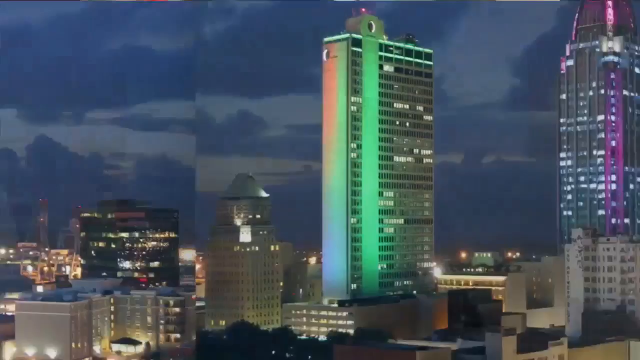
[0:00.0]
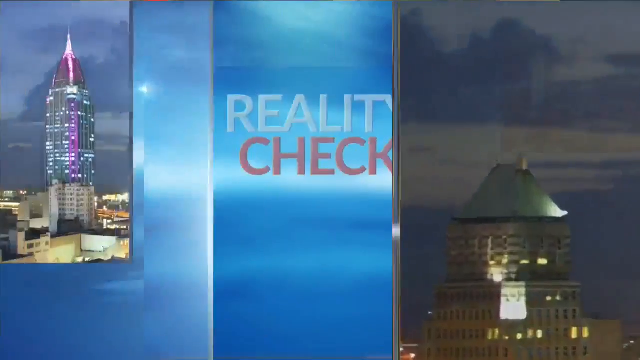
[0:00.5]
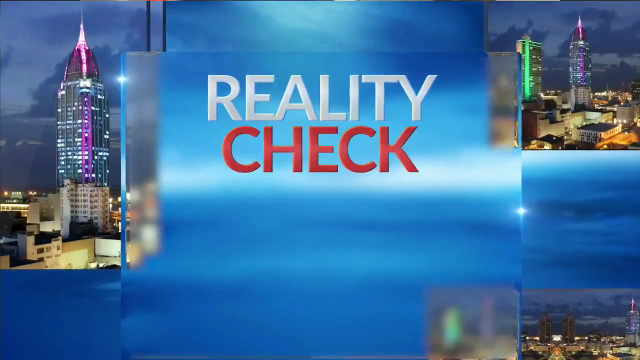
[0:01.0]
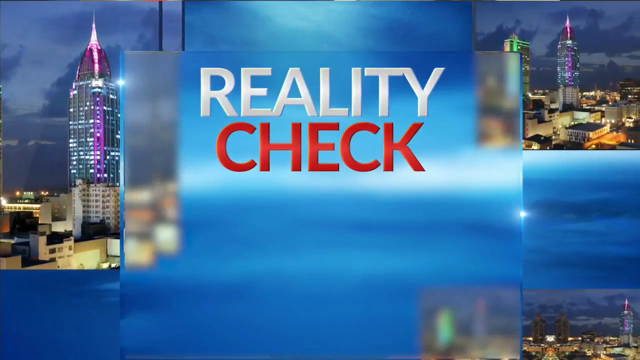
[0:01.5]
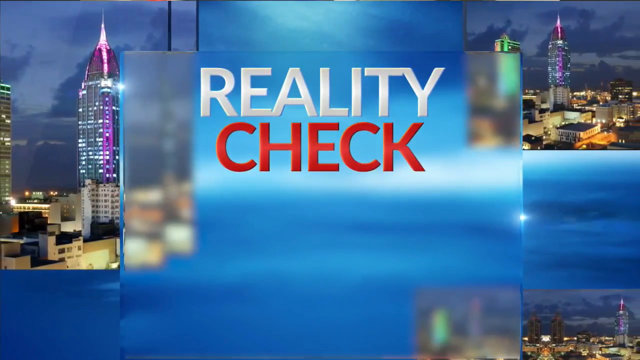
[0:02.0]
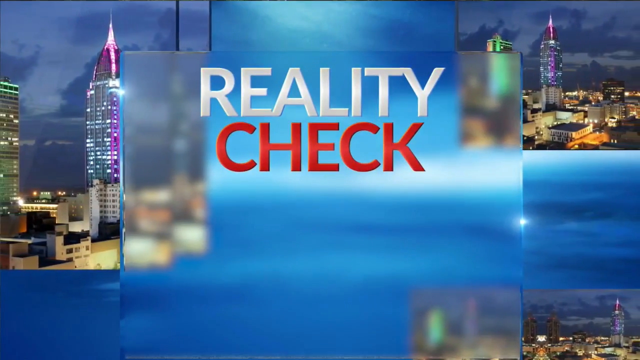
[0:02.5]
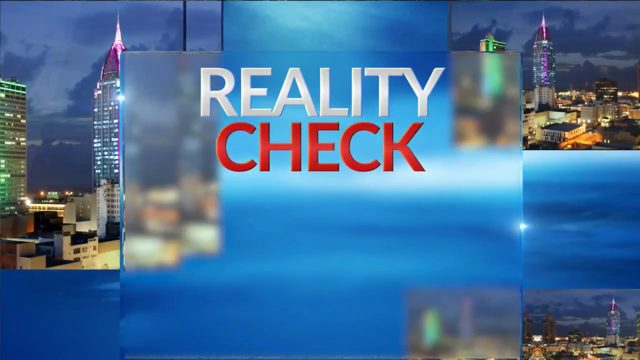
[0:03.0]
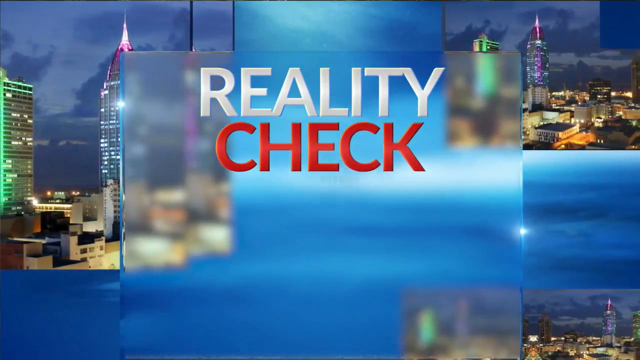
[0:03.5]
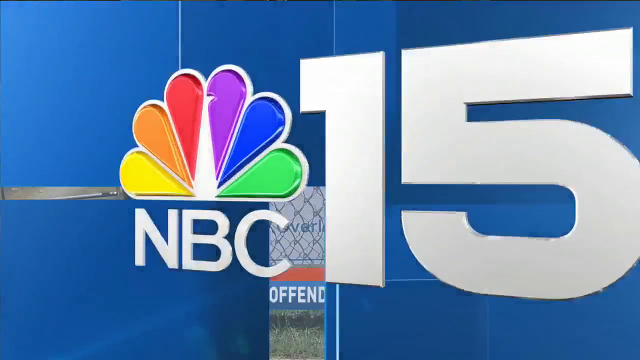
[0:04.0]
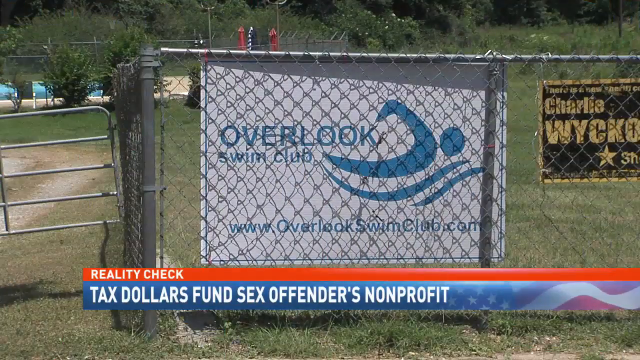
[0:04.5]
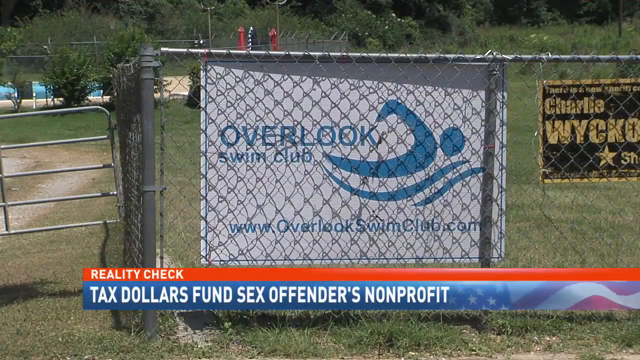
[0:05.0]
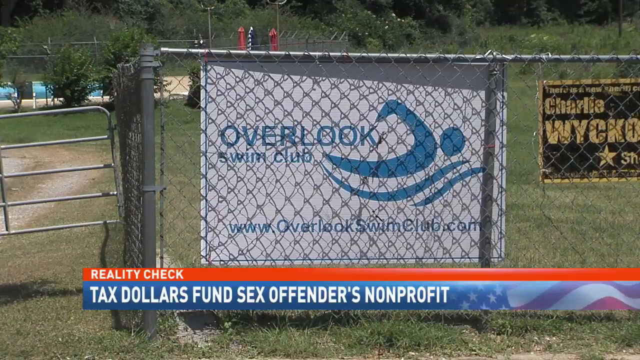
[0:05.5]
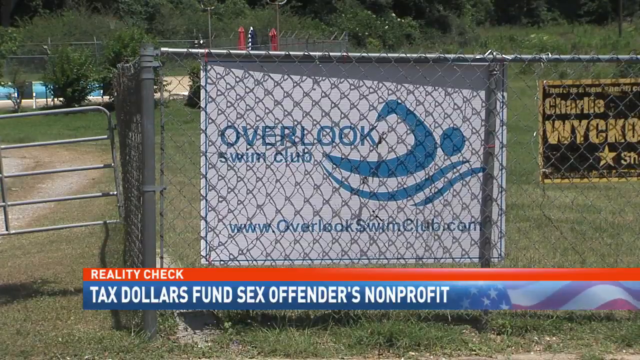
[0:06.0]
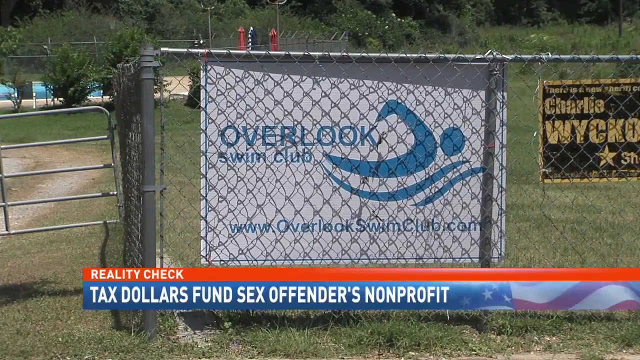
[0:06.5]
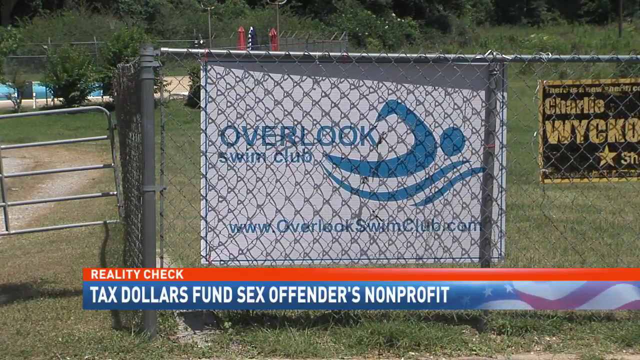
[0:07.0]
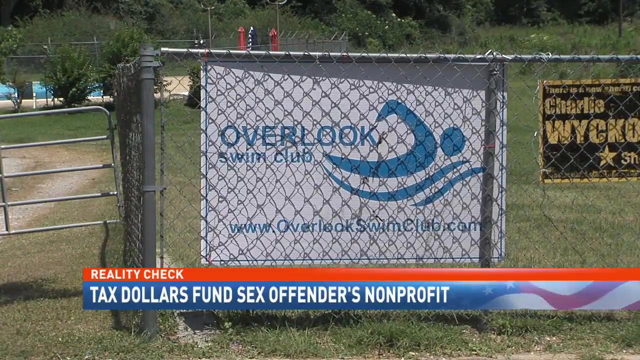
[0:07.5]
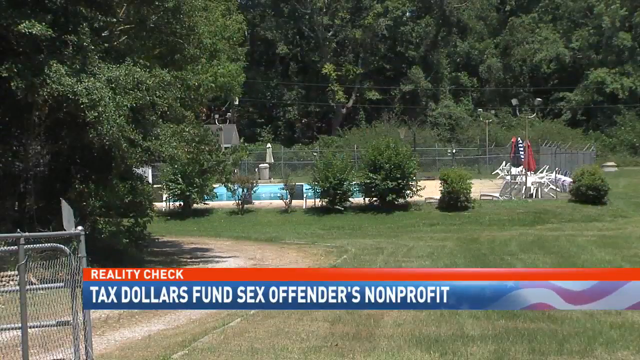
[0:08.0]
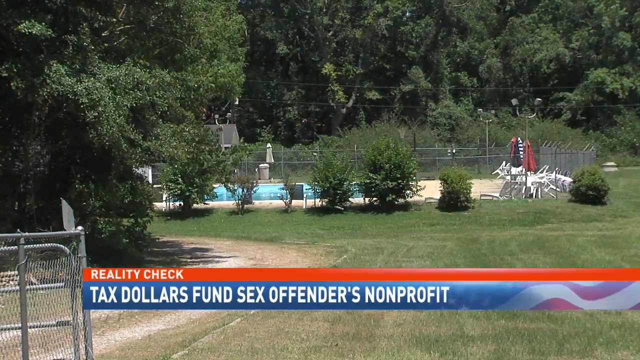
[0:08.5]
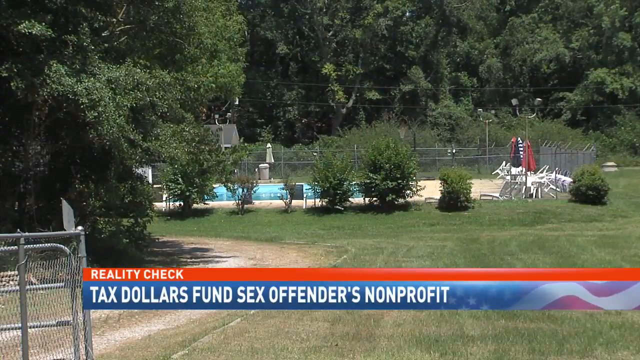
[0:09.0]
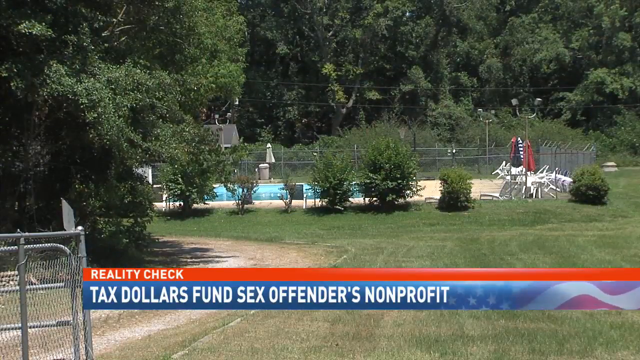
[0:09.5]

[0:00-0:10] The video opens with the text "reality check" at the top over a background of a city, with an overall blue background. An NBC15 news sign appears, then the view switches to a public pool while the text at the bottom reads "reality check" and "tax dollars fund sex offenders non-profit." The view stays on the pool, which is surrounded by a thick green forest, and continues from this angle before going back to the scene of the lit-up city in the background. A sign says "Overlook Swim Club" and shows an image of what appears to be three lines representing someone swimming, along with "overlookswimclub.com"; next to it is a sign to vote for someone for sheriff.